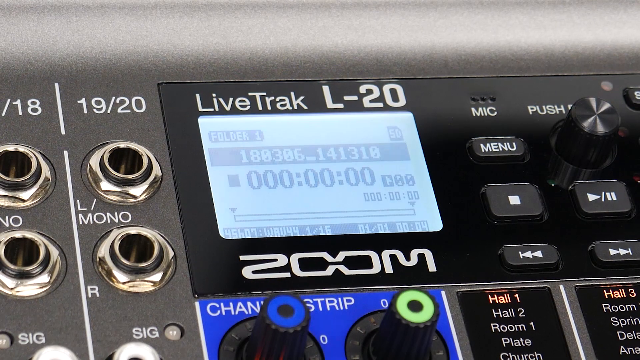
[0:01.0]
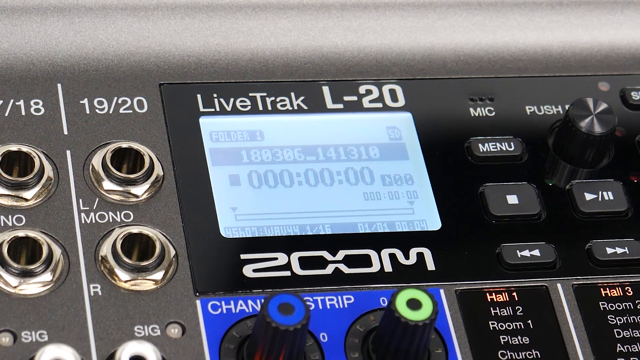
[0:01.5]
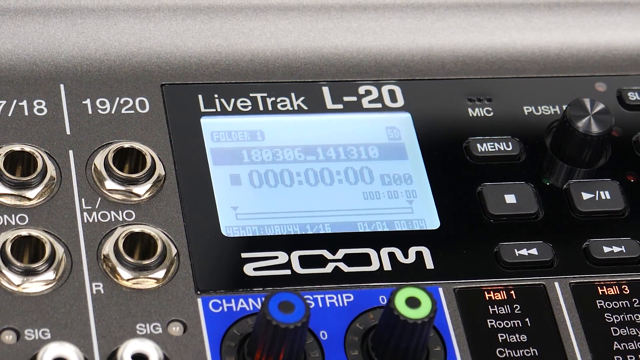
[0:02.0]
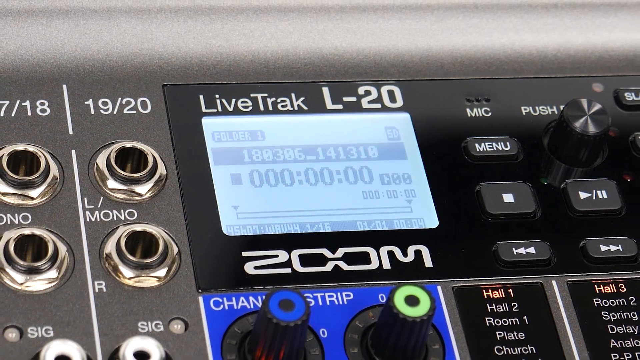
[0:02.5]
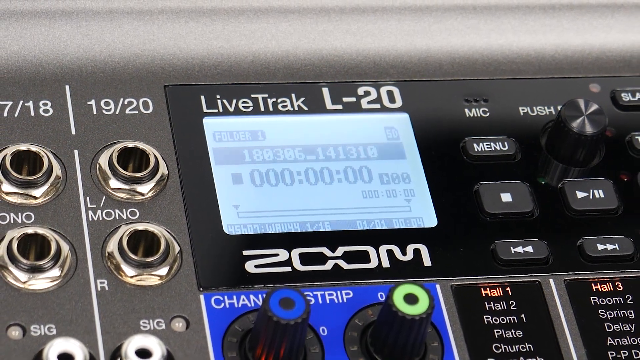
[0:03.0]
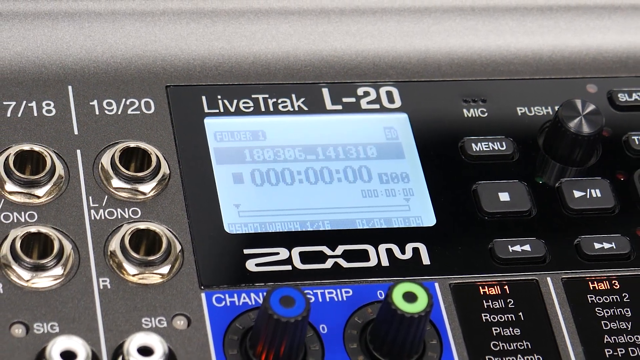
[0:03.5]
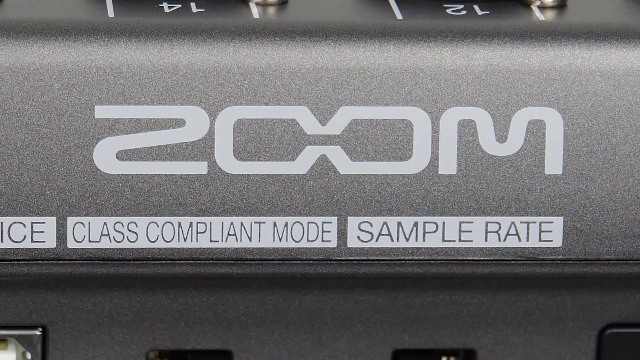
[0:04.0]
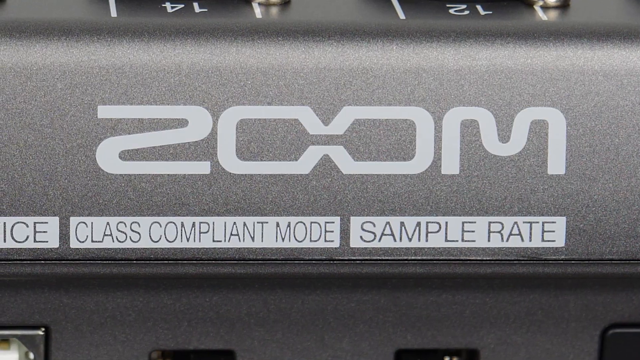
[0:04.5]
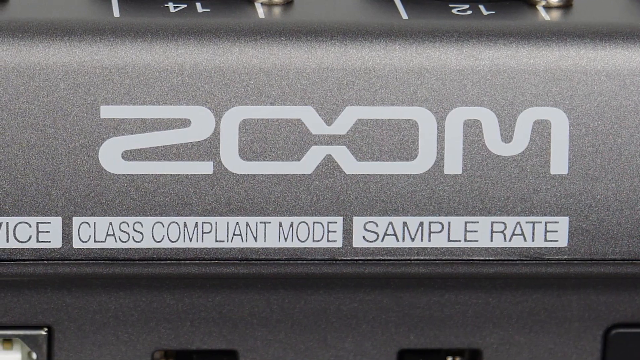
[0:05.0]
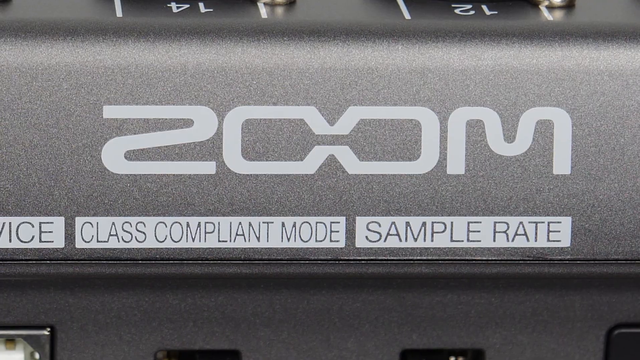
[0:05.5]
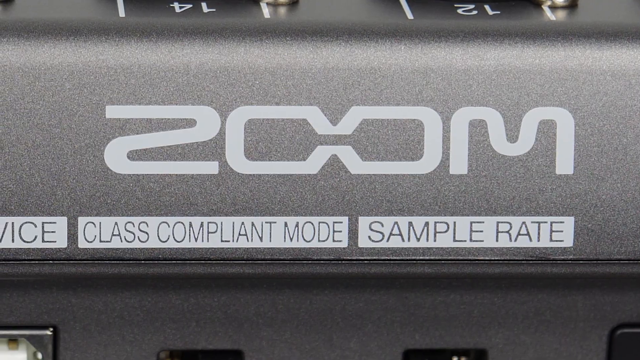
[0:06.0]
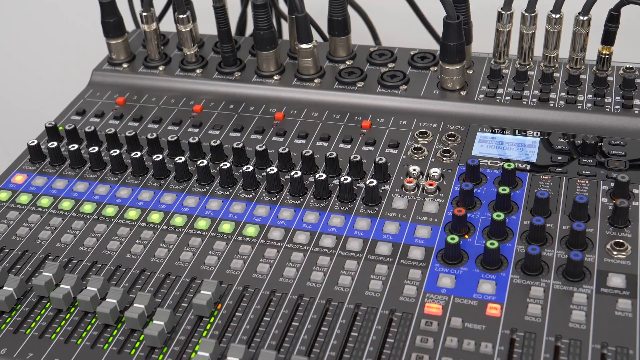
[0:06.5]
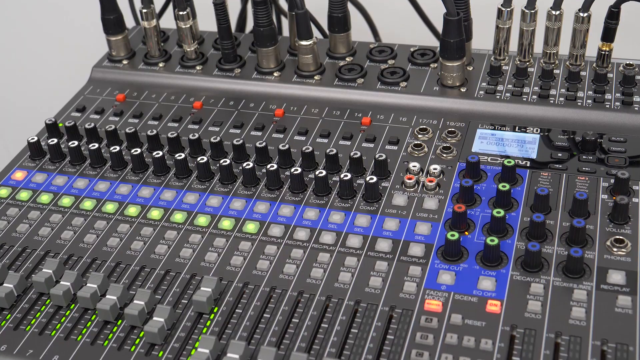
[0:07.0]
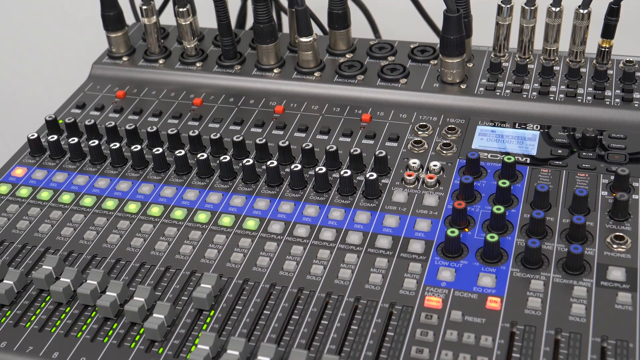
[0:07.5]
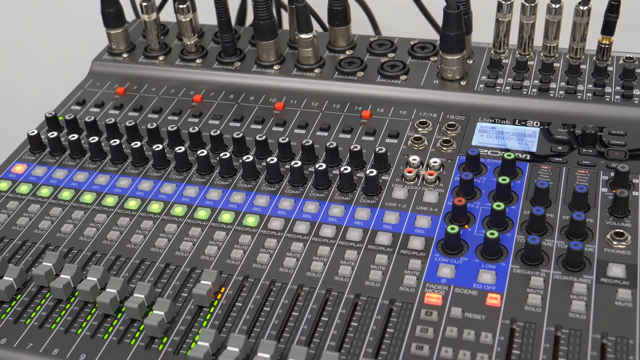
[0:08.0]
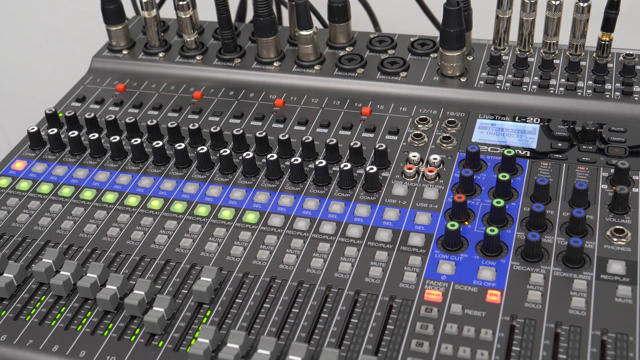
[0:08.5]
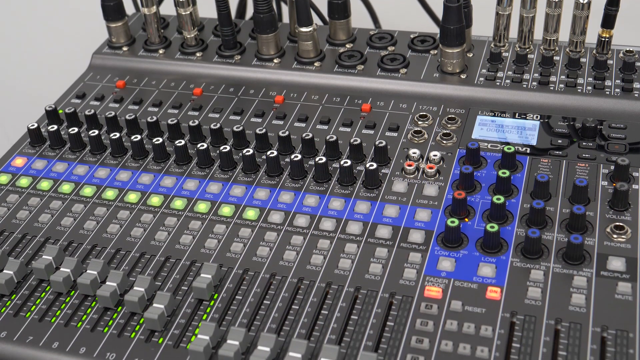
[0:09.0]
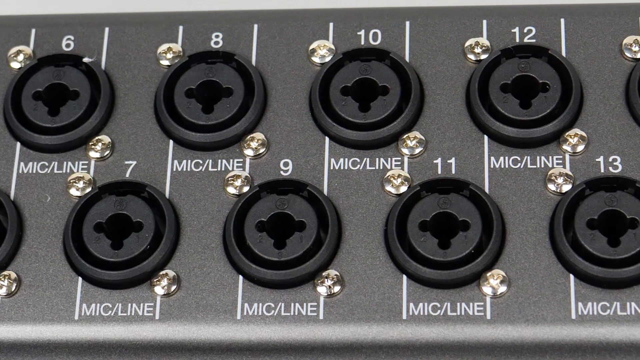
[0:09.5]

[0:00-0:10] The video shows a machine that looks like something used for changing sounds when recording, as in a sound studio. The words "Live Track L20" are on it. It has lots of buttons, switches for moving sounds up and down, and knobs that can be turned. It has compartments for plugging things in, apparently for microphones or headphones, and many things are already plugged in. Text including the word "sample" is written on it, and "L20" is written on it as well. The main body of the machine is gray, and some of its buttons are black.